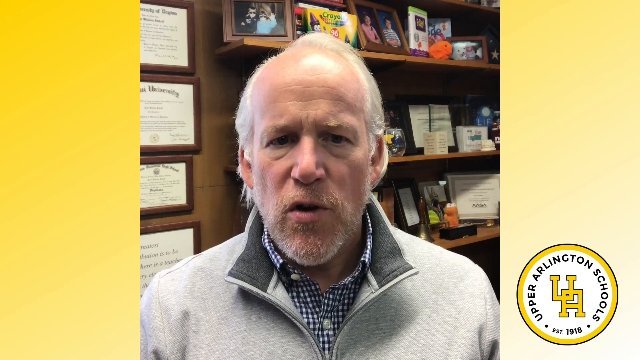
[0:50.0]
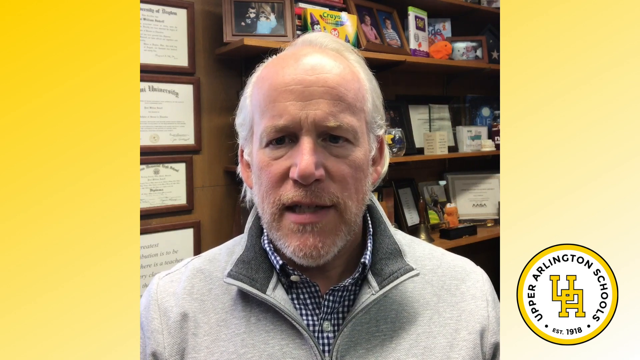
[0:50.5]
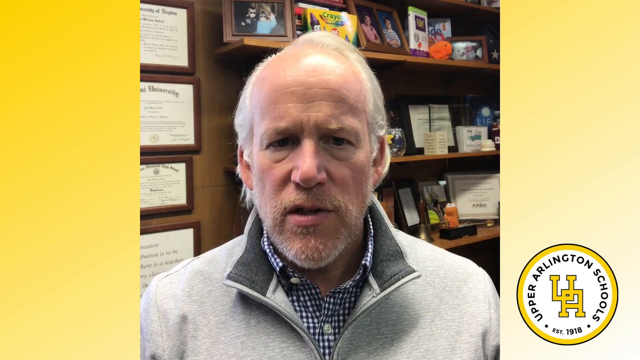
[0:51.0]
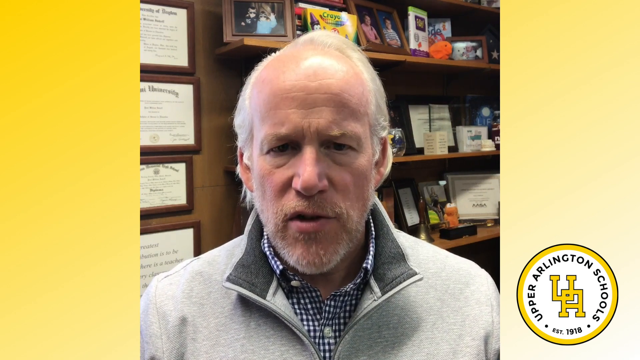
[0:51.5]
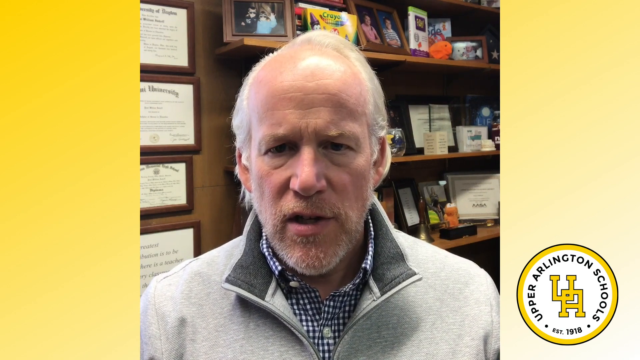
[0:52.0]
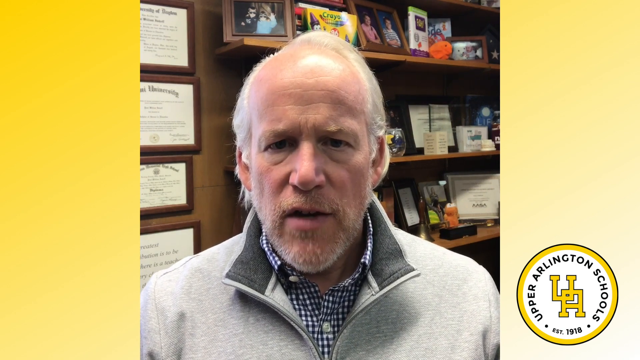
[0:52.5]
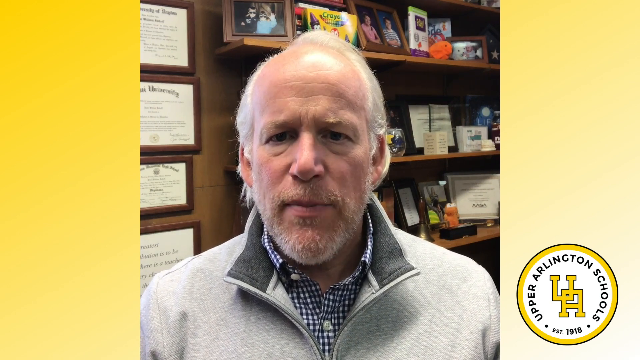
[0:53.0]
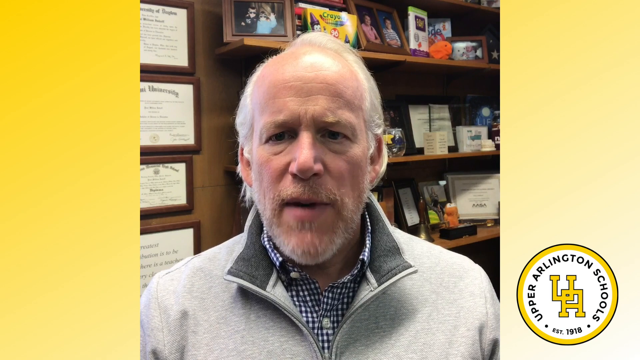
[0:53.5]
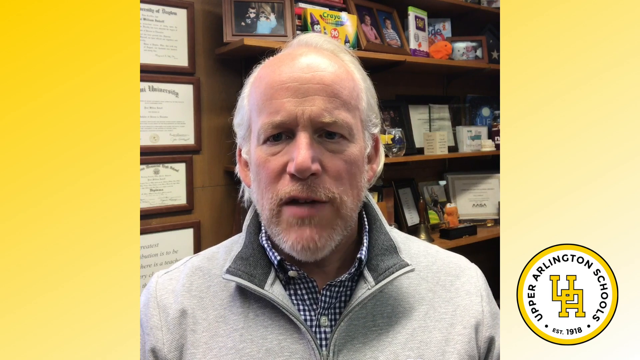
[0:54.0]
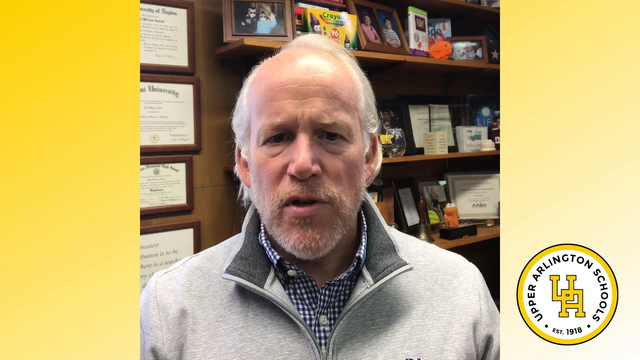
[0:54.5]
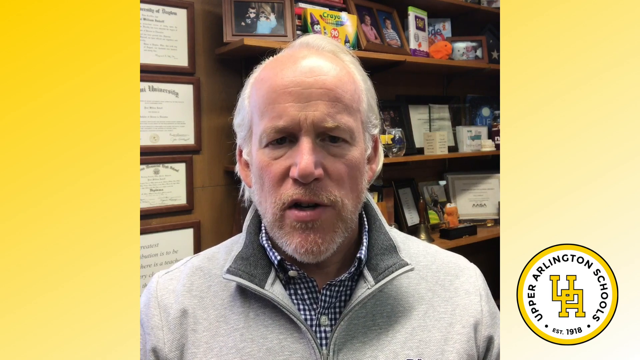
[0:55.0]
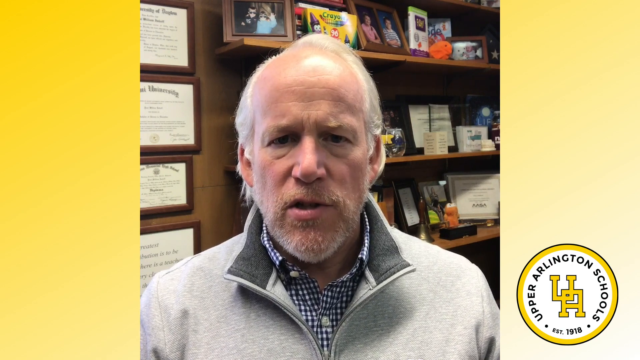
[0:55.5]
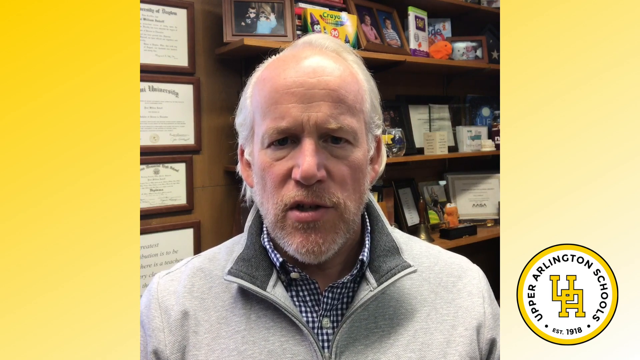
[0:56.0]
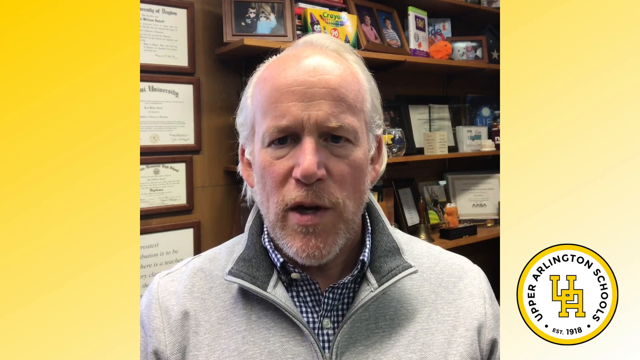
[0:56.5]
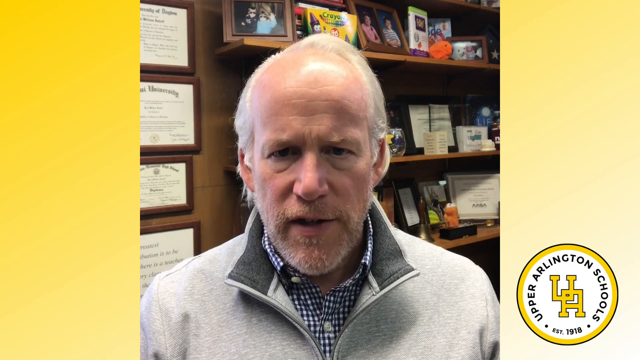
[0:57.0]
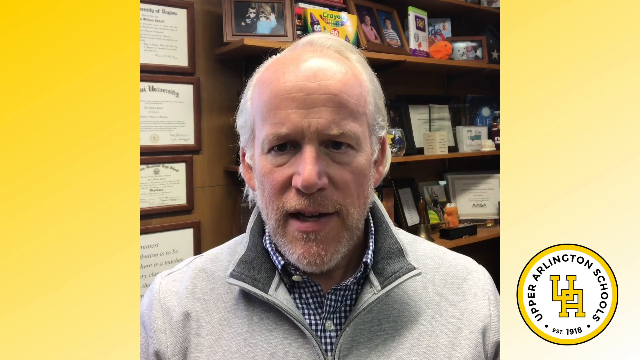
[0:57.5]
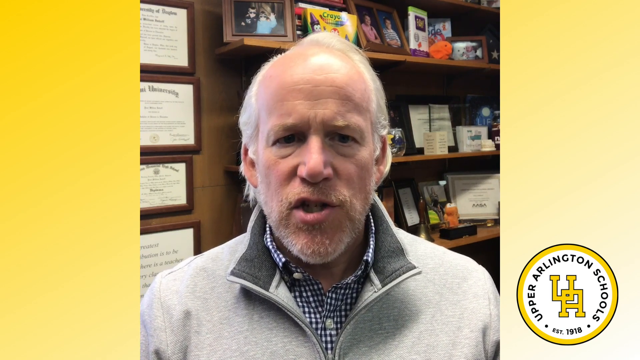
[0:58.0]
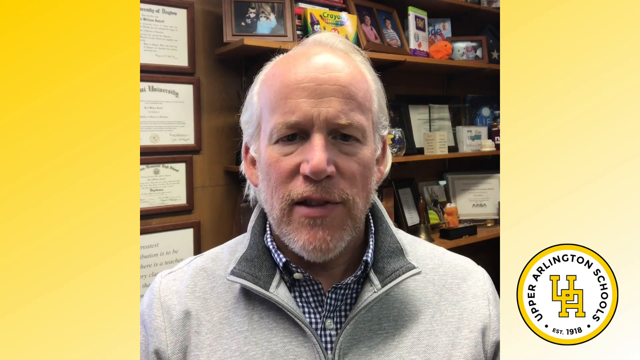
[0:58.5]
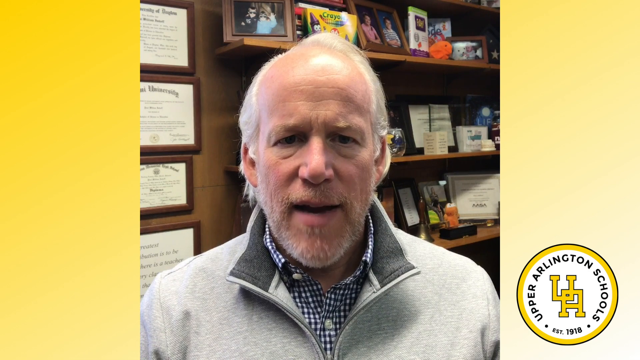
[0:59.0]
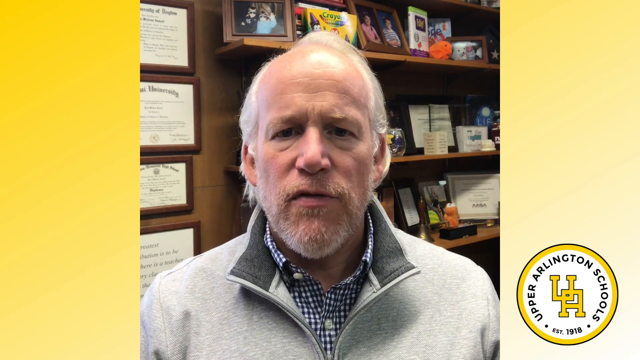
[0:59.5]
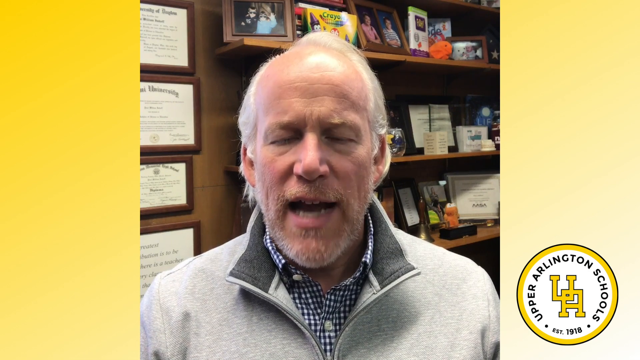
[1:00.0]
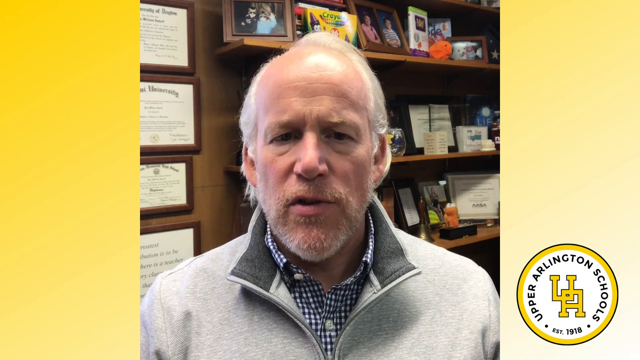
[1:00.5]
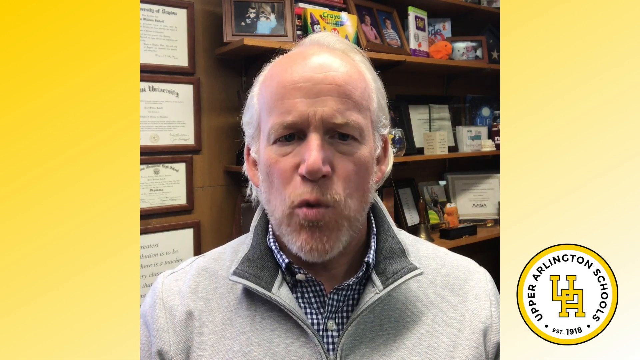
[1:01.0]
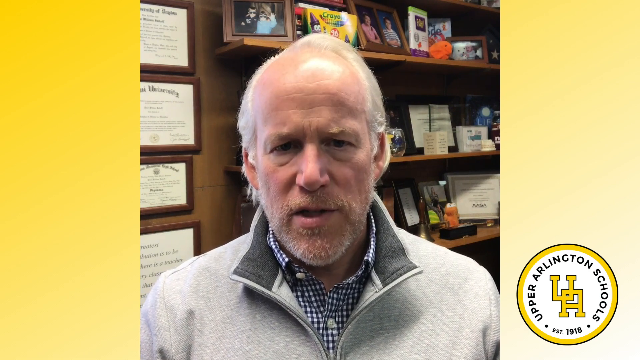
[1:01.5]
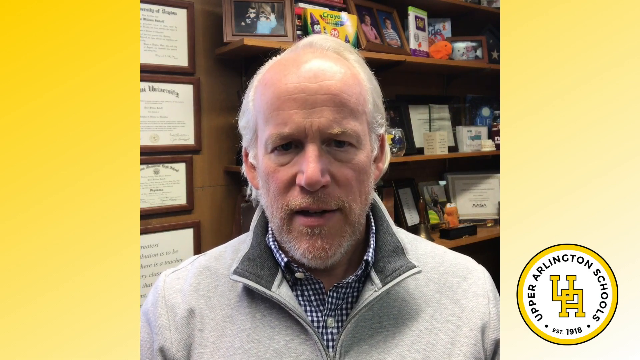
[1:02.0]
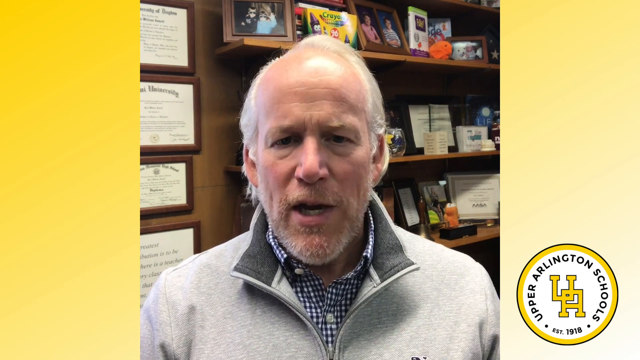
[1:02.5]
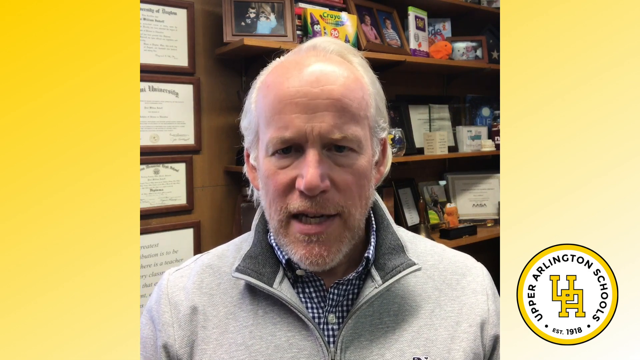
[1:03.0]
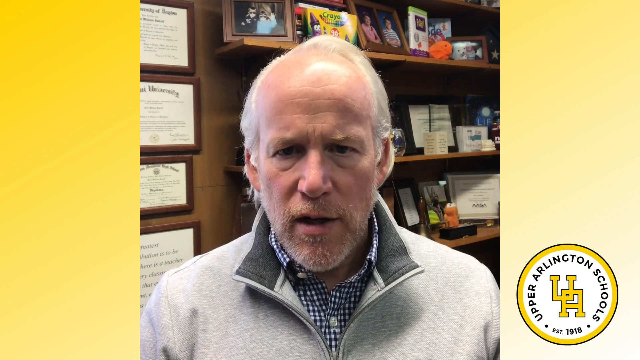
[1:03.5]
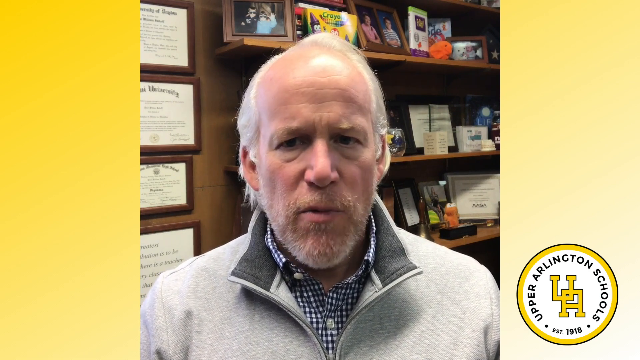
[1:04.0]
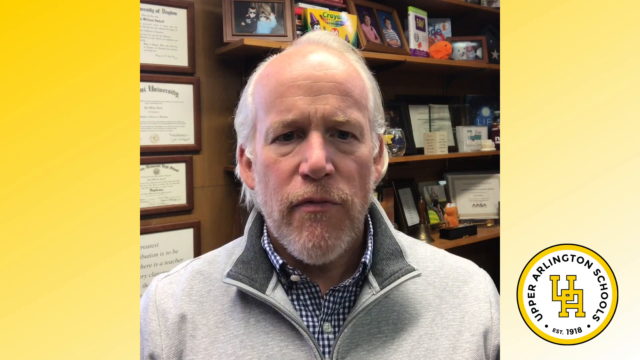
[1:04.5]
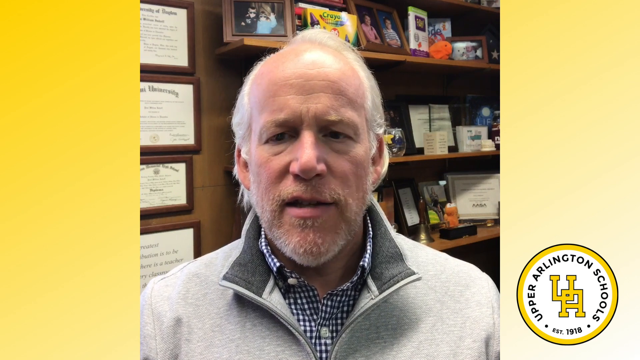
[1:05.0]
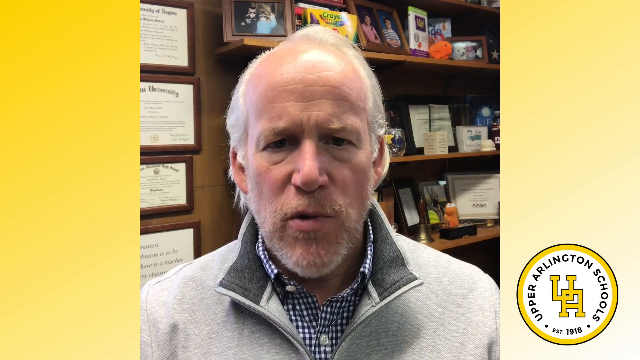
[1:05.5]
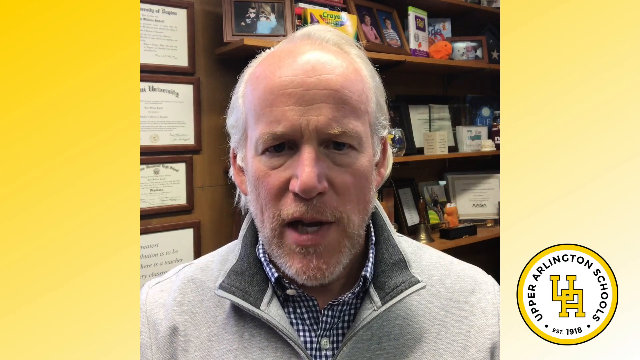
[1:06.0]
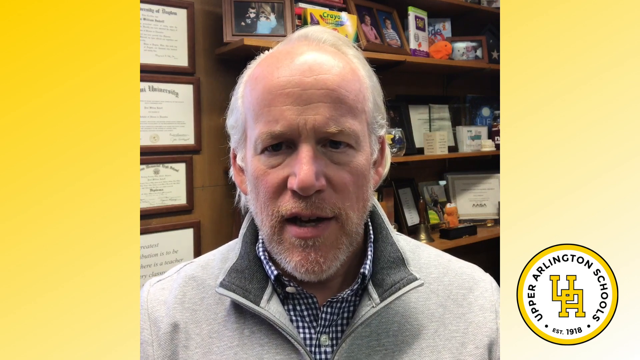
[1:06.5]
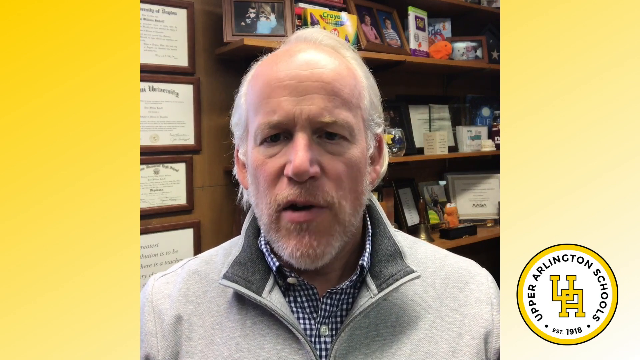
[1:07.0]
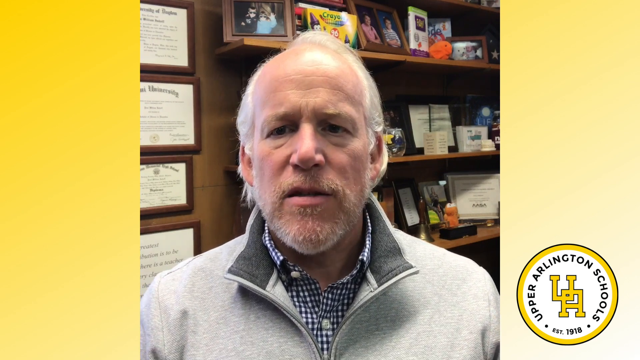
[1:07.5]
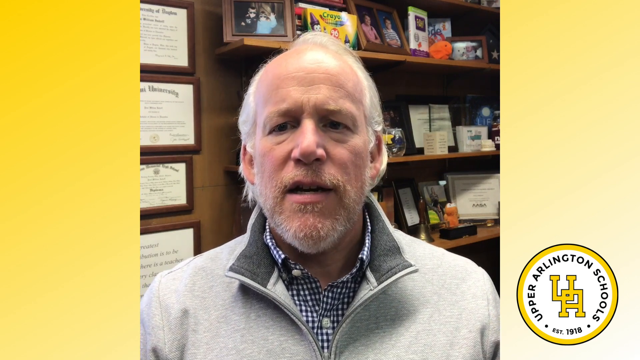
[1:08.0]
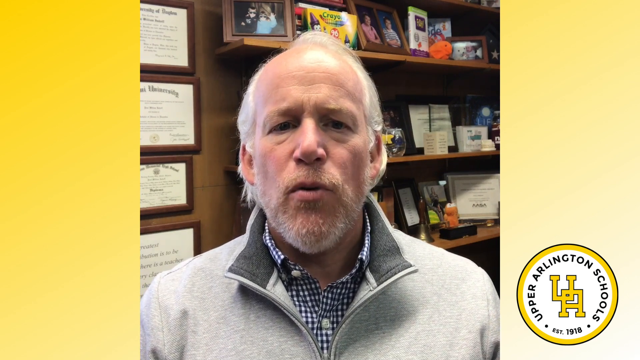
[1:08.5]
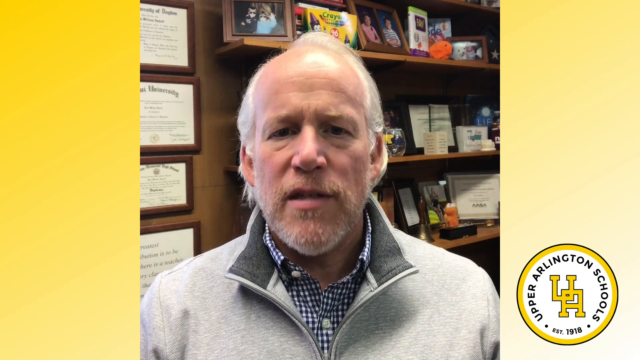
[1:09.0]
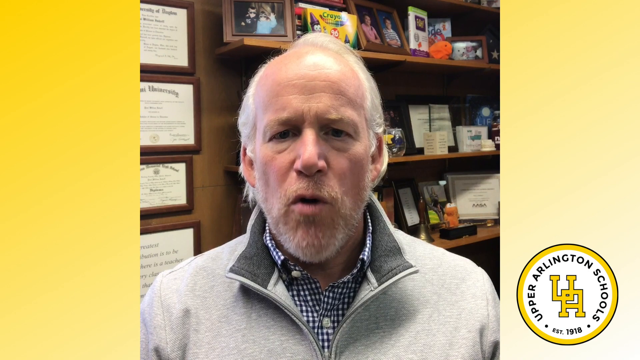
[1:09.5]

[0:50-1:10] The older man is shown against a yellow and white gradient background. In the corner is the school emblem, a circle with a bold black outline and a thicker yellow outline, with "Upper Arlington Schools" and "EST 1918" inside and a yellow U and a yellow A. The man talks to the camera. Behind him is a shelf full of pictures and possibly awards, with what are probably his educational diplomas on the right of the shelf. He wears a gray jersey with a checkered shirt and continues talking.